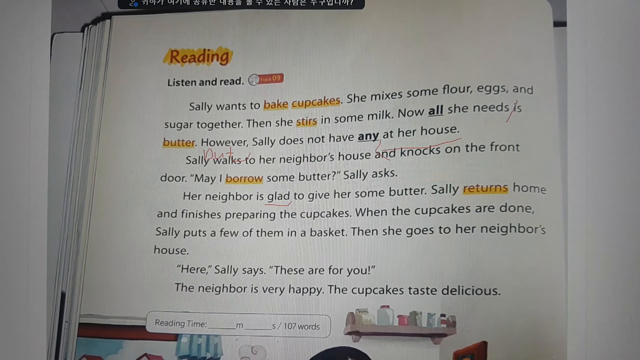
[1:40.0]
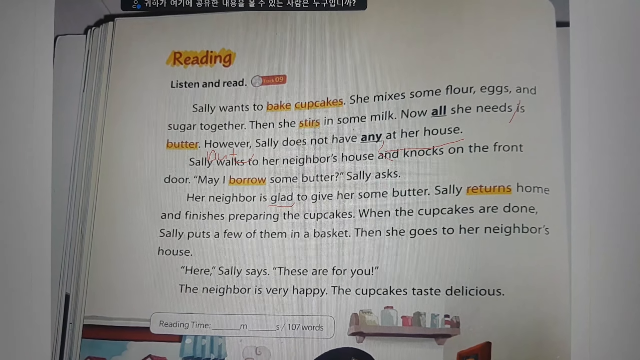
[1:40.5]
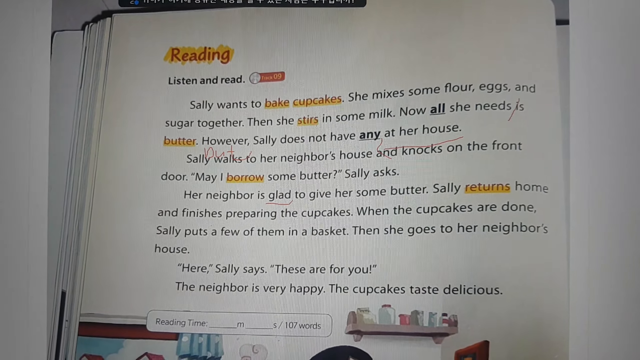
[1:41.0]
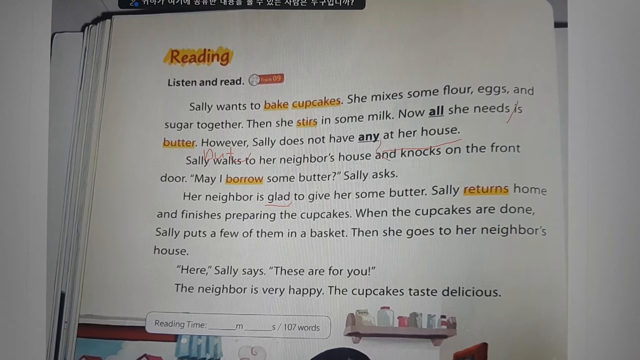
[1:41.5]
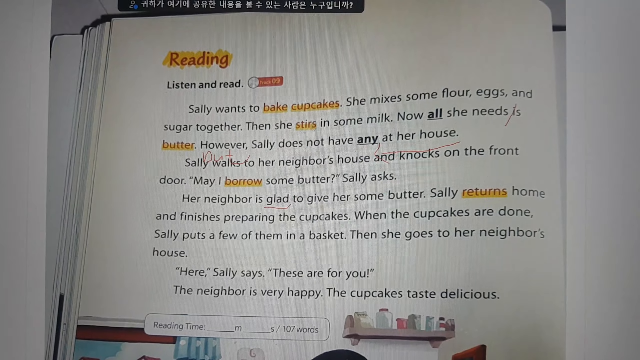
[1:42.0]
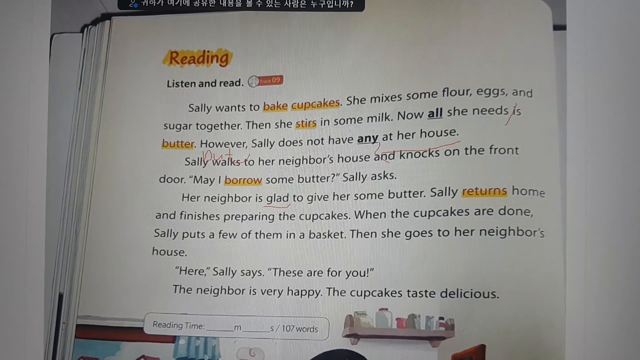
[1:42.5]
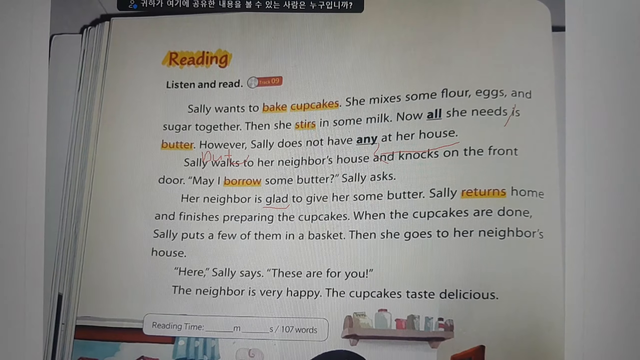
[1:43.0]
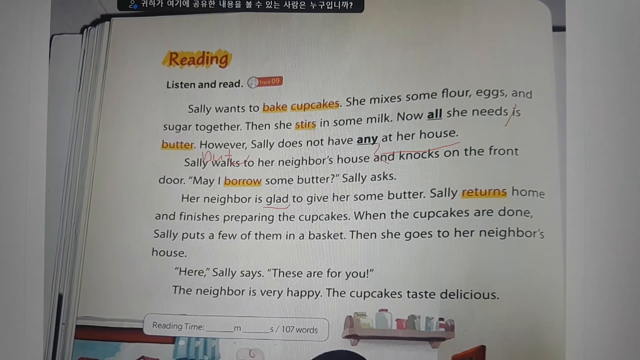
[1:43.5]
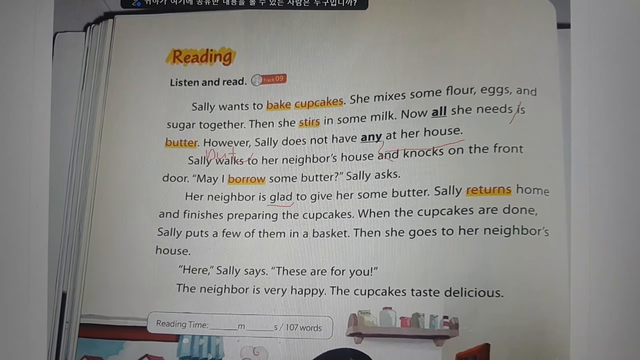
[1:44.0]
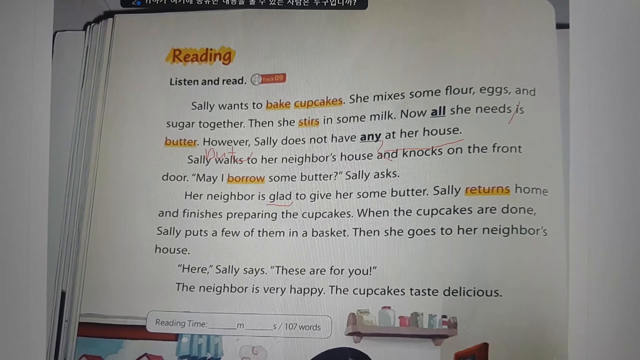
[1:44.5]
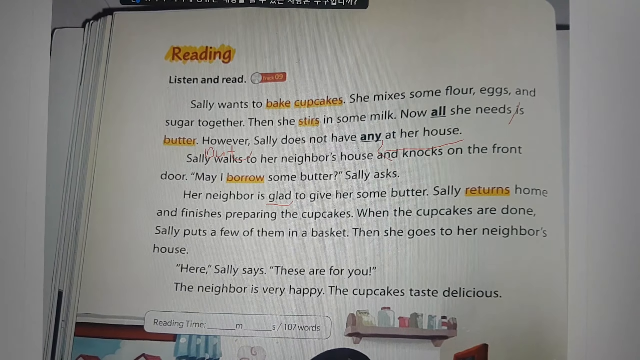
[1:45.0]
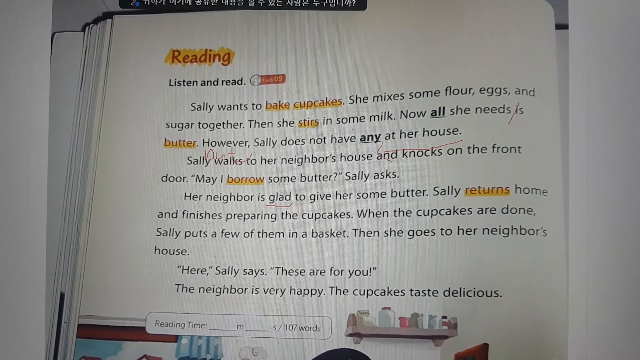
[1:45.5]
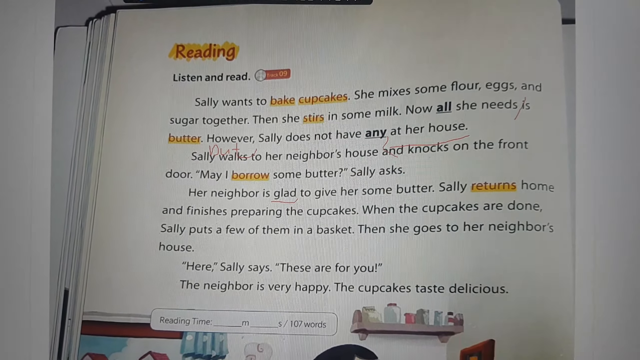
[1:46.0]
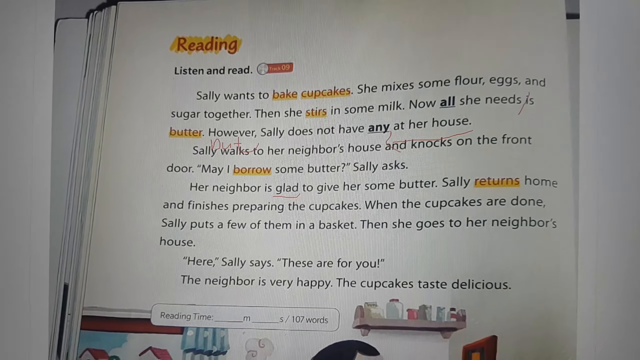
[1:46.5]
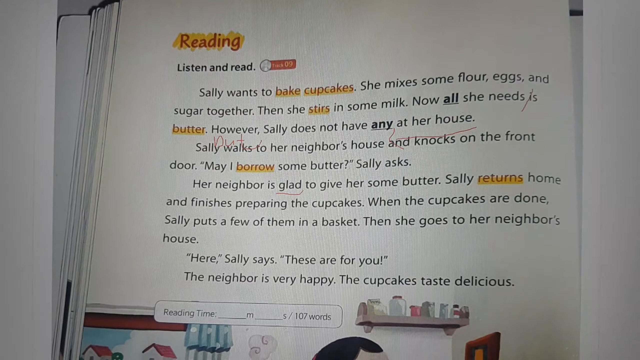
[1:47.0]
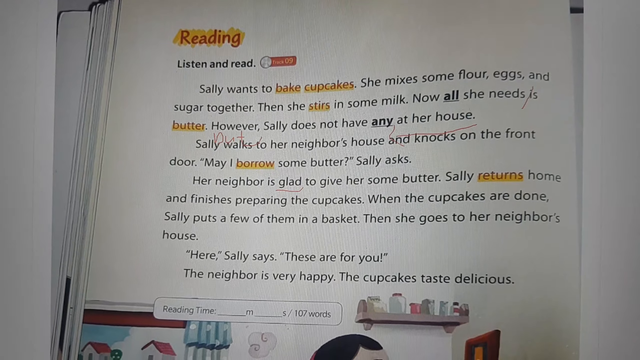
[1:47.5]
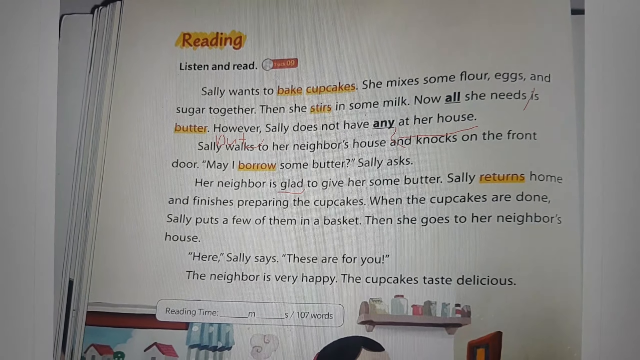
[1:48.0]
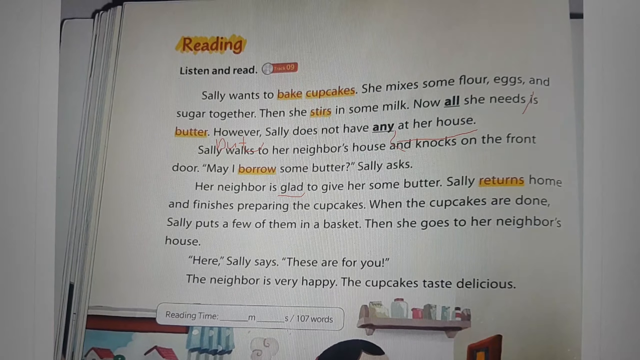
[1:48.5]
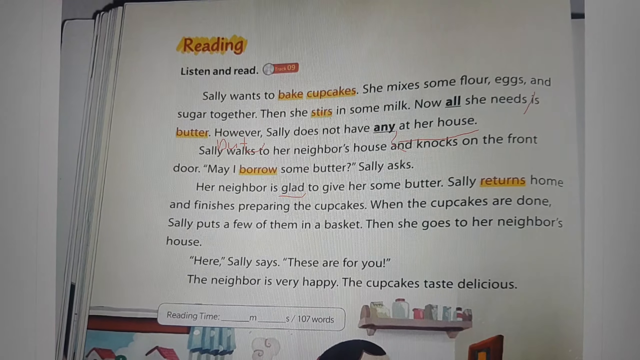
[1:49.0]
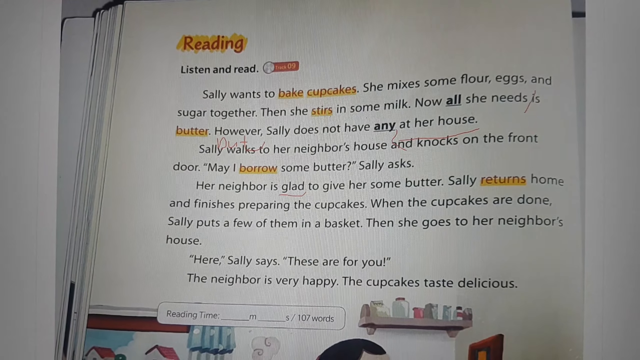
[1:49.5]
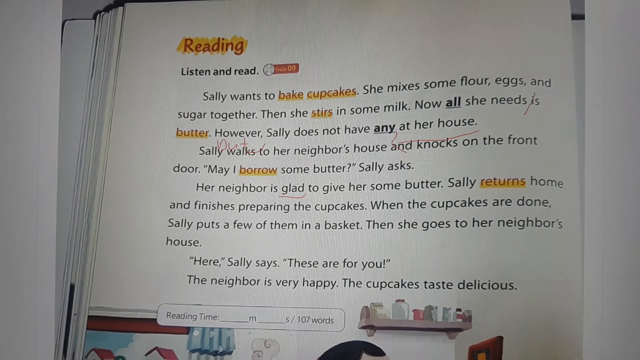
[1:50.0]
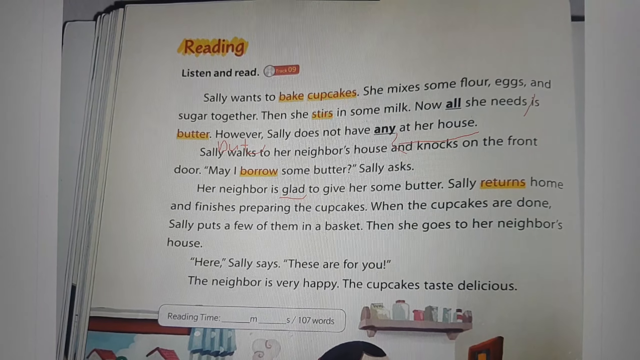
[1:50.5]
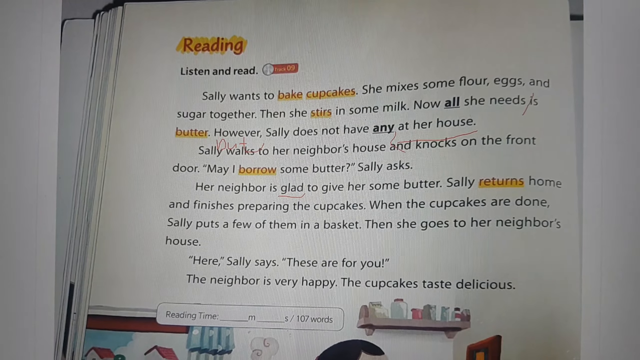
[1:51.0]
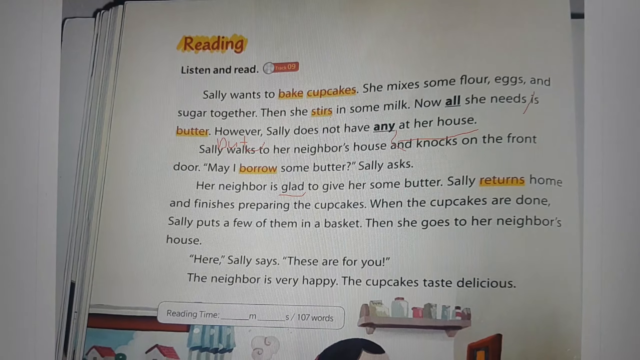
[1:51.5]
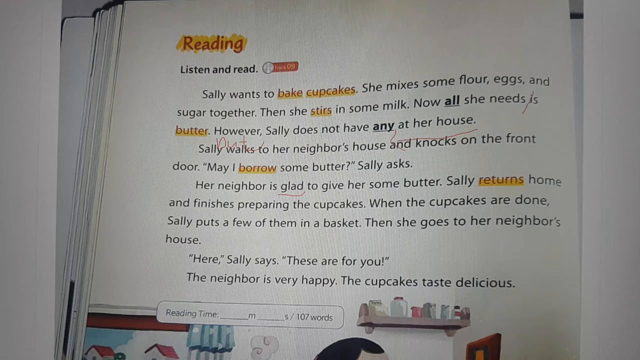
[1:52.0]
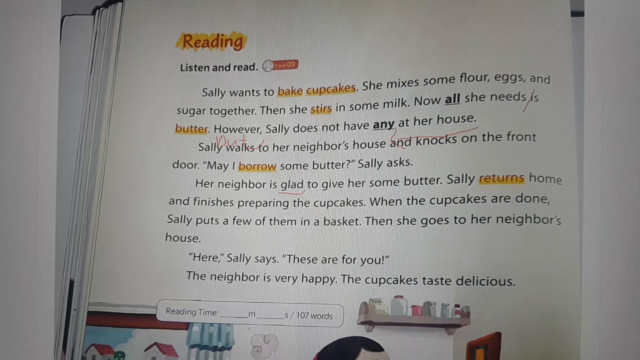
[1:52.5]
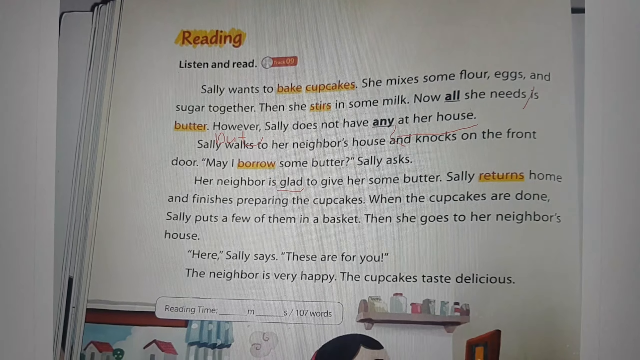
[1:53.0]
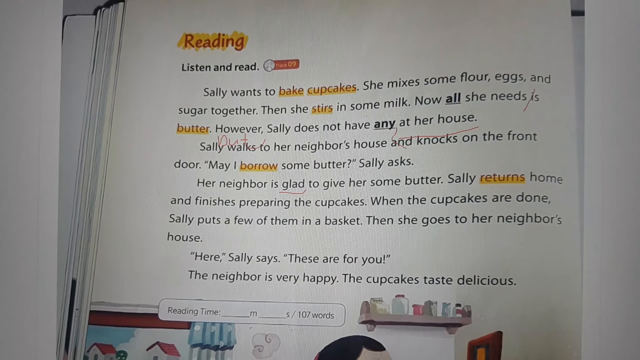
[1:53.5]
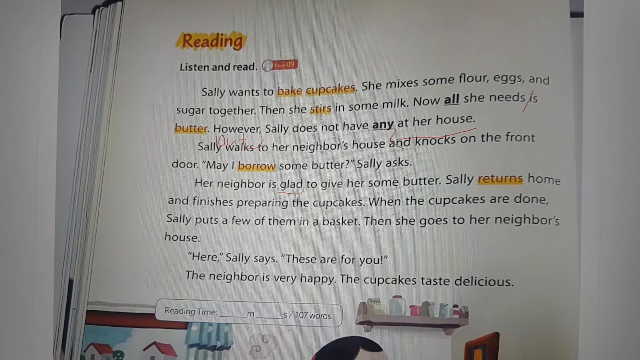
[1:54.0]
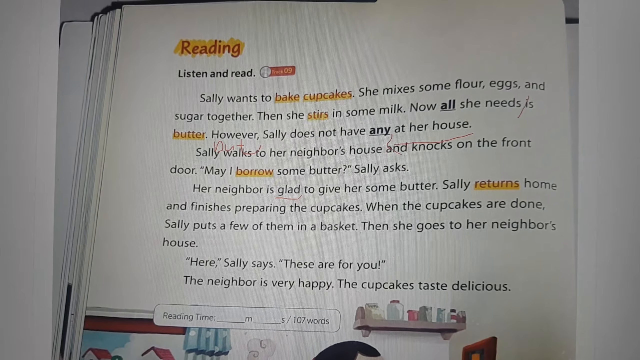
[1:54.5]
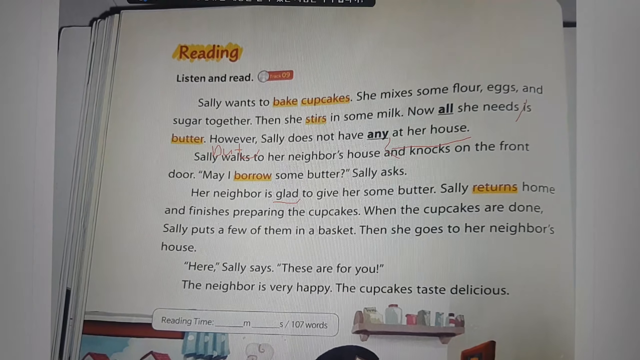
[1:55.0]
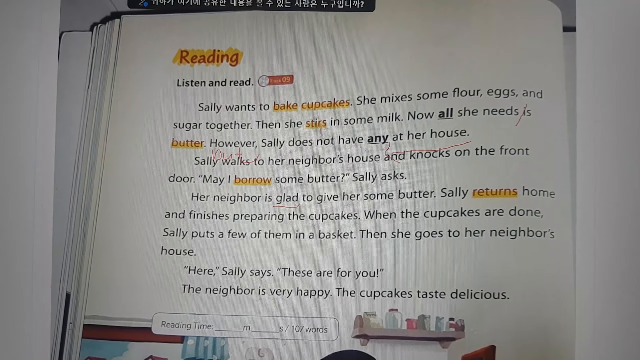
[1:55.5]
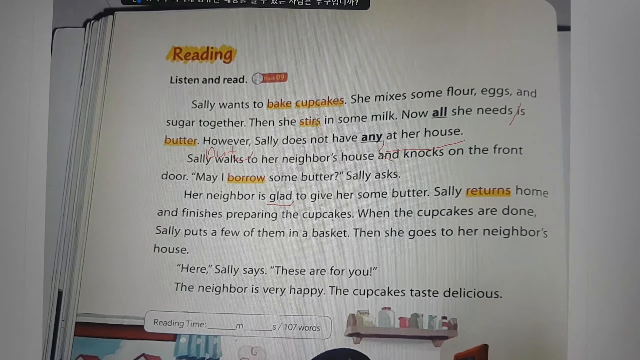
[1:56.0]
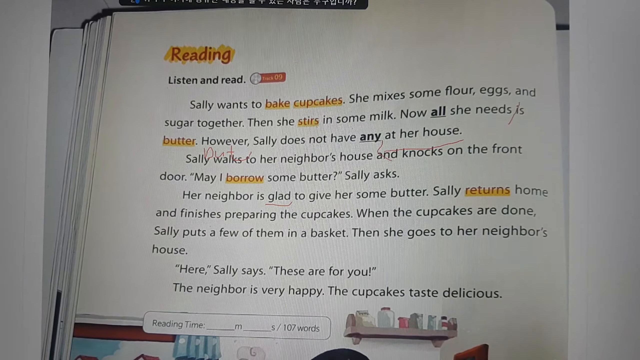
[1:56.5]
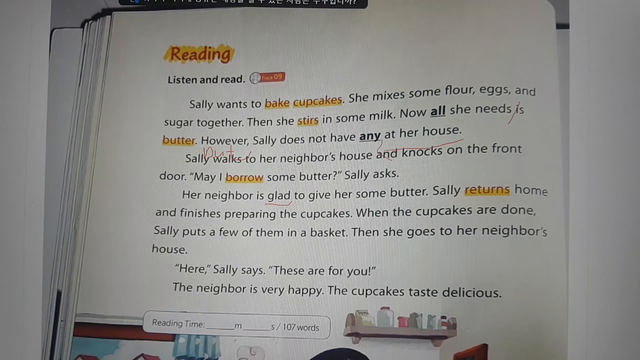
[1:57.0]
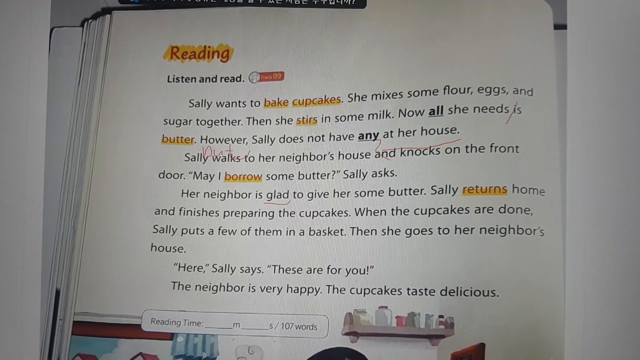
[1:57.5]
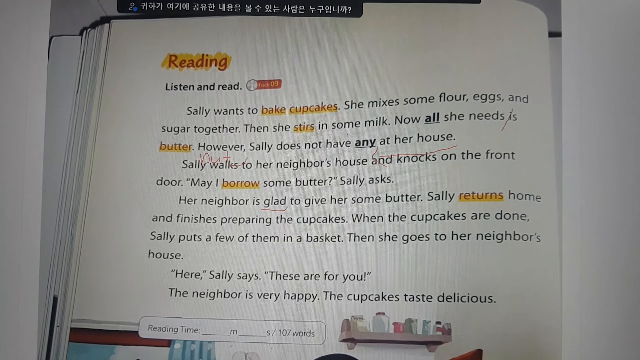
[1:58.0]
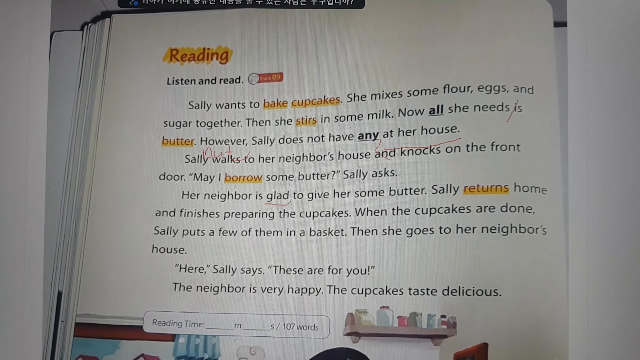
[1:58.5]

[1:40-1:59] The same story remains on screen. Near the end, some text that looks to be Asian, maybe Chinese, appears at the top, possibly the title of the software being used. At the bottom, there is text saying "reading time" followed by an amount of minutes, and the story is indicated as having 107 words.